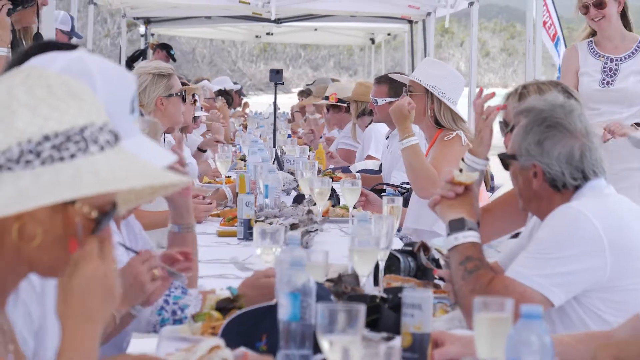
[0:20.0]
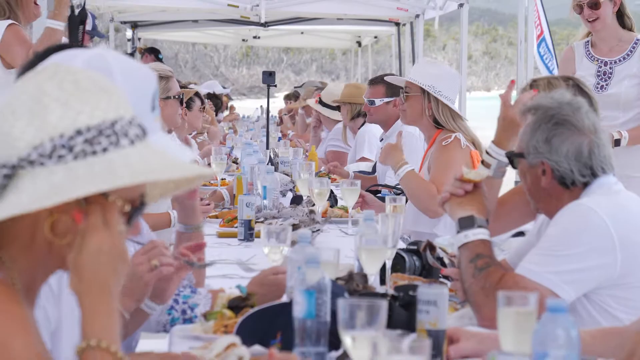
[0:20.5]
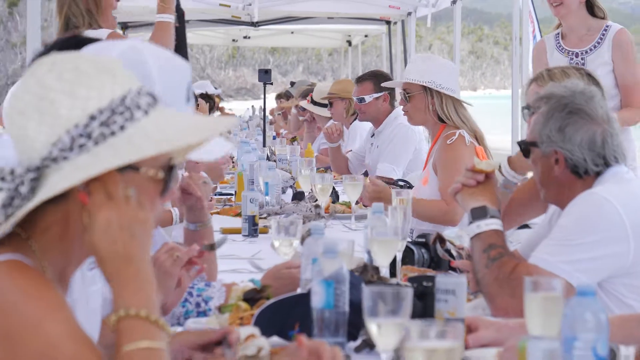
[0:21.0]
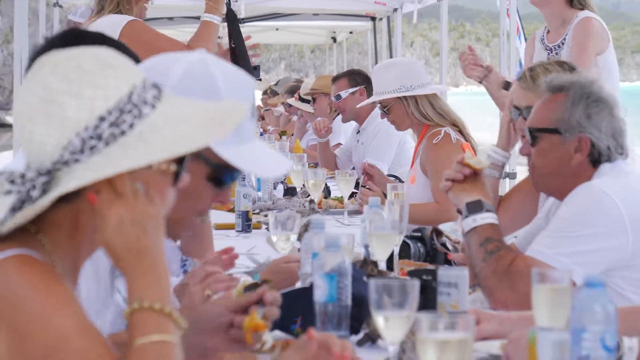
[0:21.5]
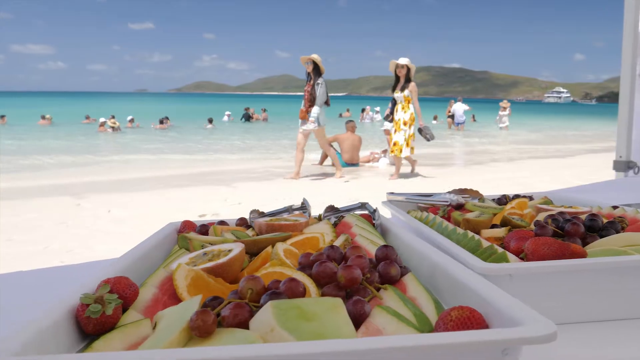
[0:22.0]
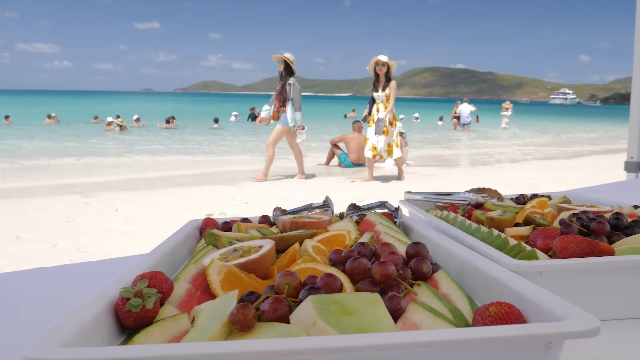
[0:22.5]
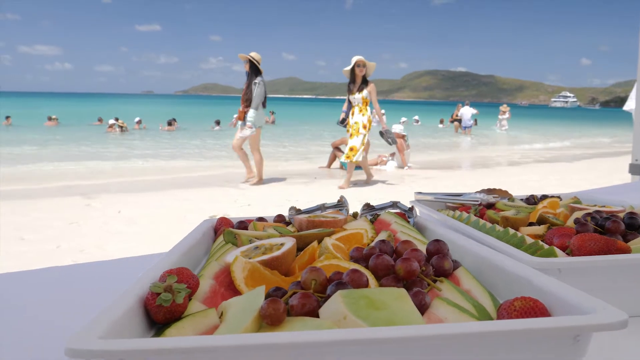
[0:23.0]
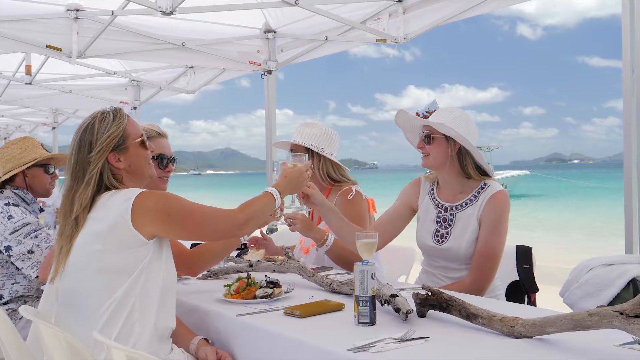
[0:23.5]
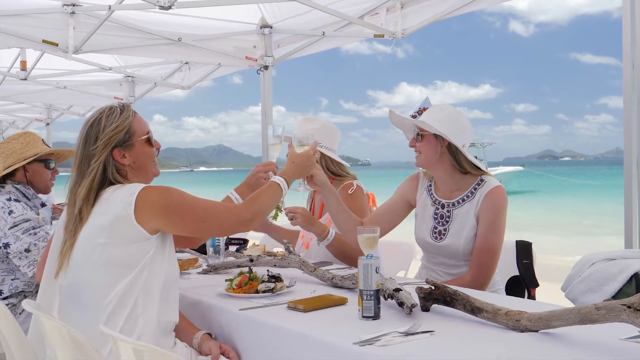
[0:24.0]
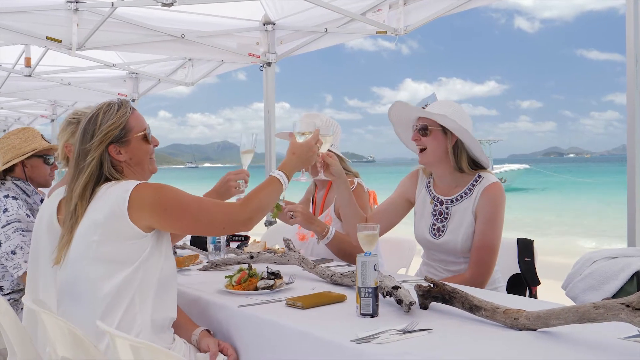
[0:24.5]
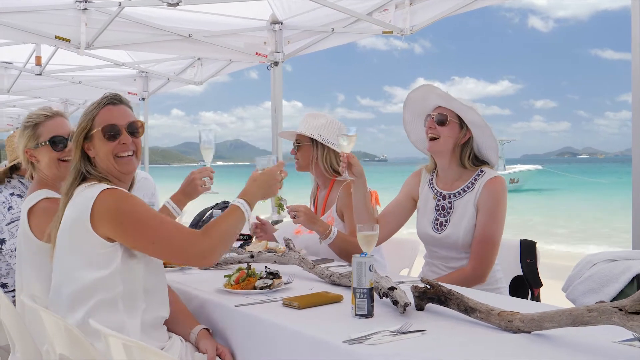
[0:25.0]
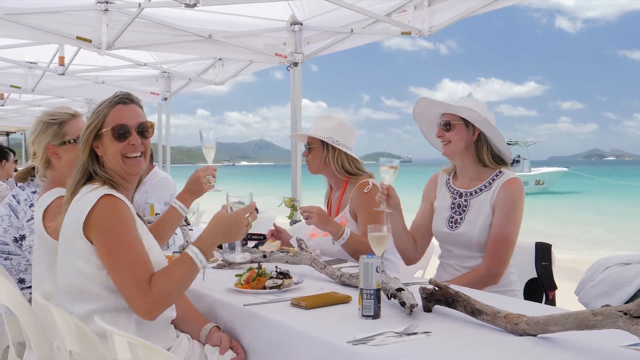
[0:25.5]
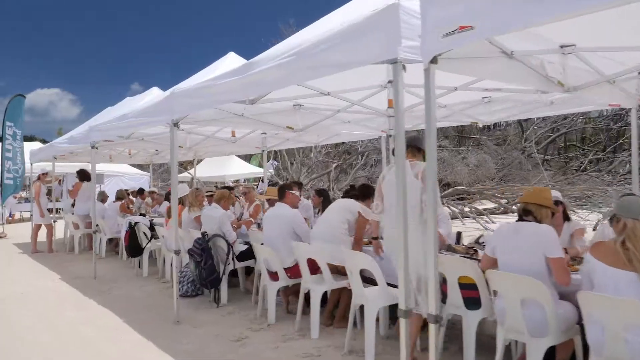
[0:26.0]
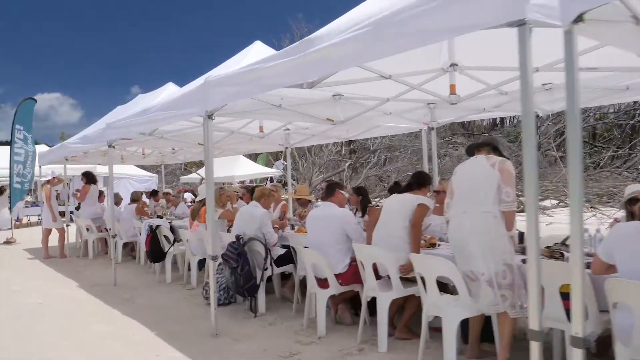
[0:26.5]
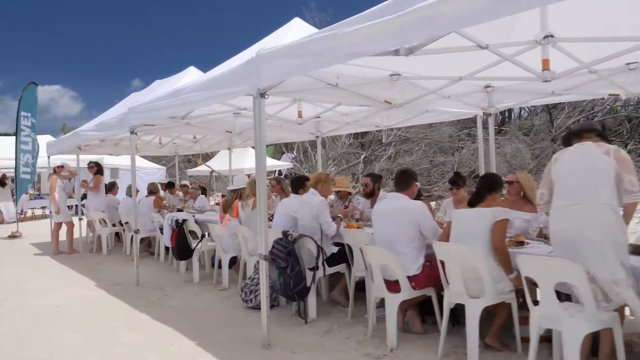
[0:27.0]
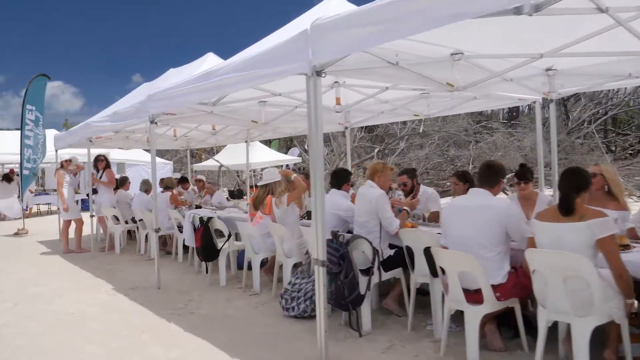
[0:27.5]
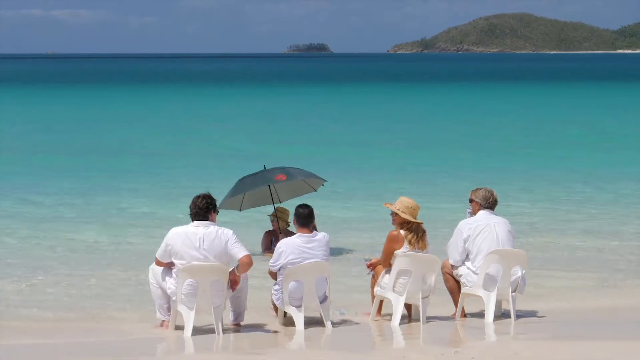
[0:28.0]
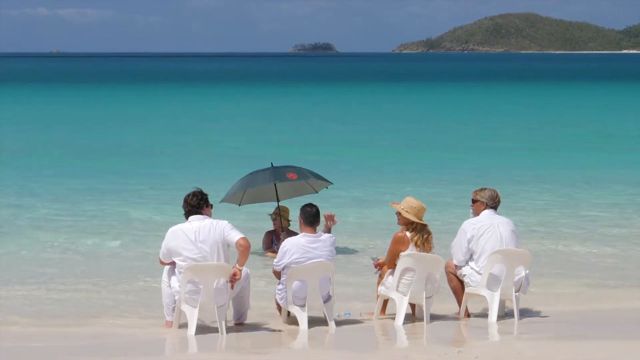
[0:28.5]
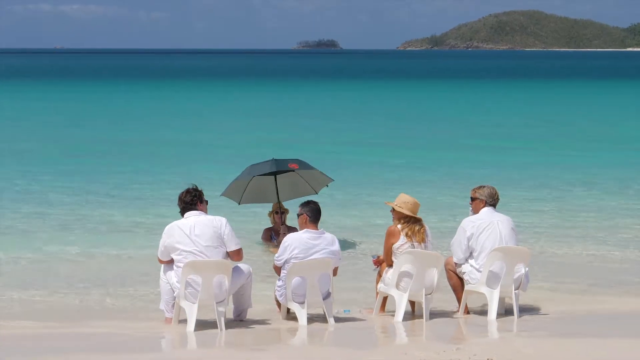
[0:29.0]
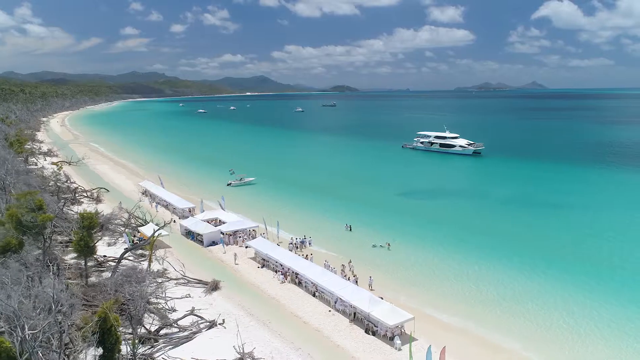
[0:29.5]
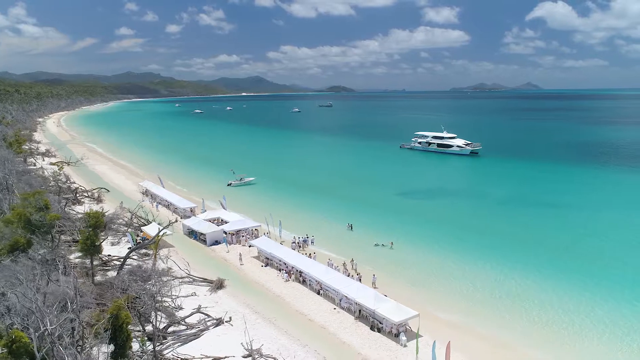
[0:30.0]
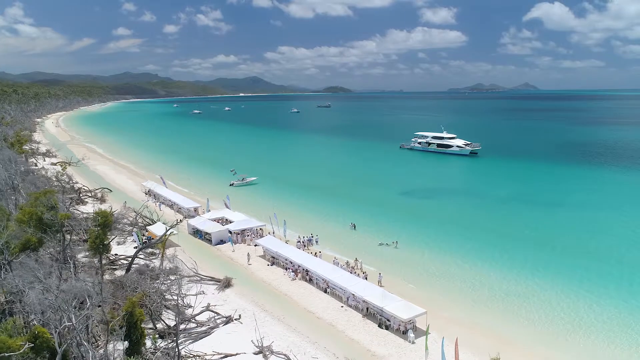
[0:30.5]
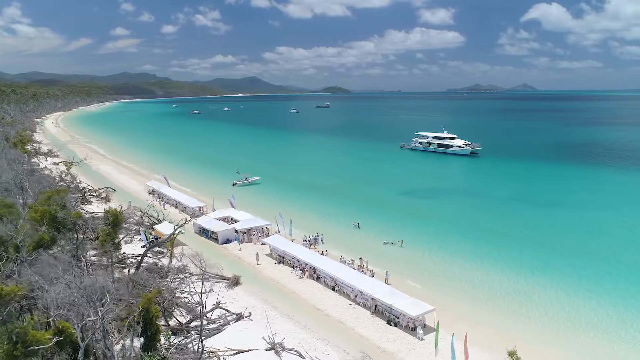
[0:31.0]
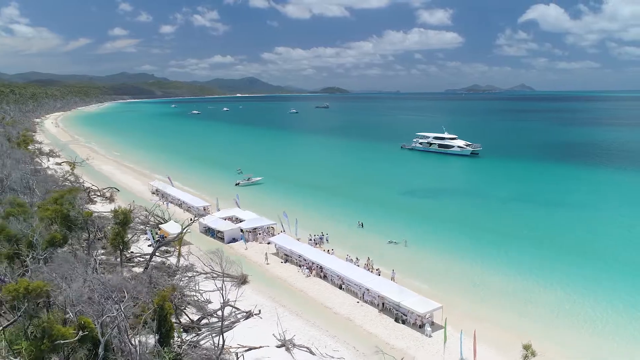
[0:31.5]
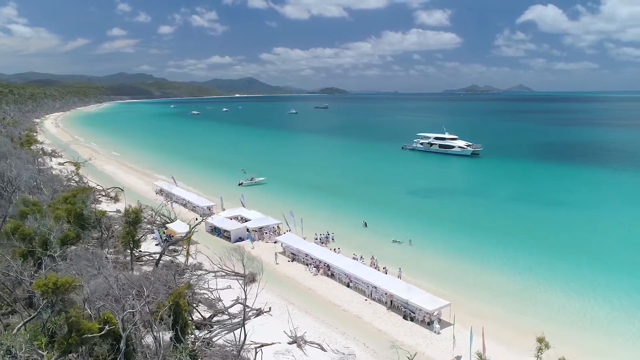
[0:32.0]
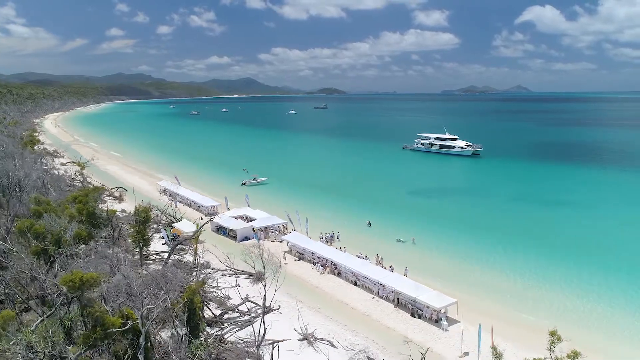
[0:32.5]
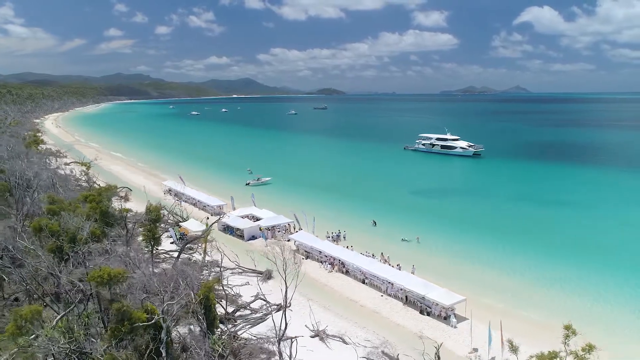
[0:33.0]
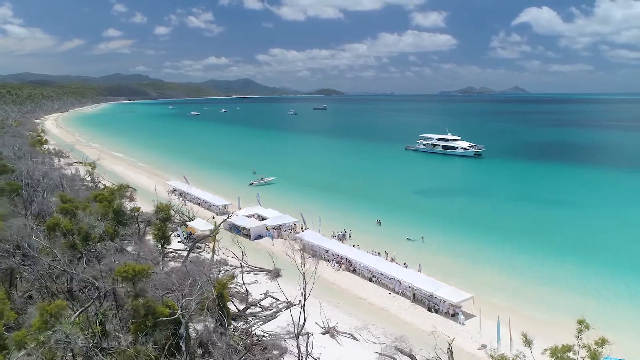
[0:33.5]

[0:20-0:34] Multiple people sit at some kind of outdoor dining table with multiple similar white canopies over it, eating and drinking. The video cuts to a white sandy beach with clear blue water, where multiple people lounge either on the beach or in the water. It is a low-angle shot, and at the bottom of the screen there is a platter covered with fresh-cut fruit. The video cuts back to the banquet tables, where people clink their champagne flutes together with platters of food in front of them. A panning shot then moves across the people at the banquet table. Next, people lounge in chairs looking at the water and ocean. Finally, the video cuts back to an aerial view of the beach.